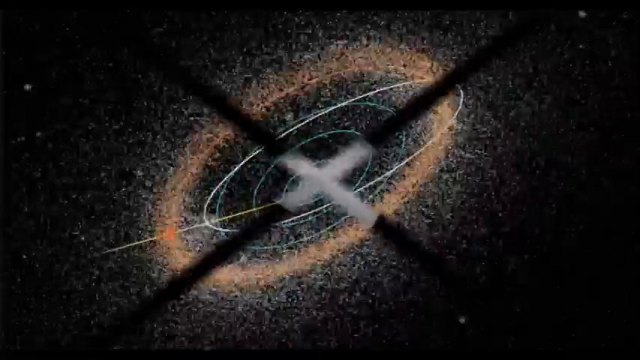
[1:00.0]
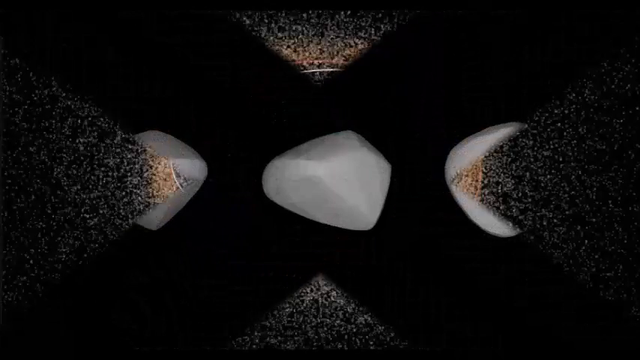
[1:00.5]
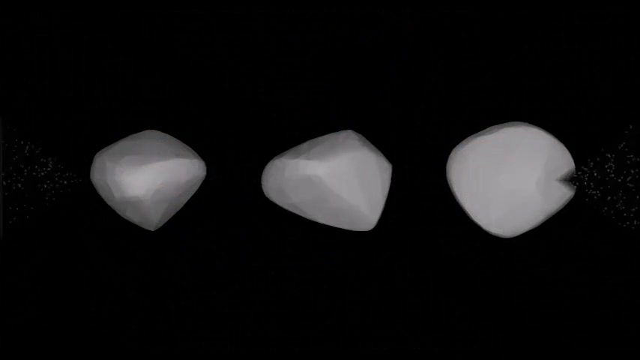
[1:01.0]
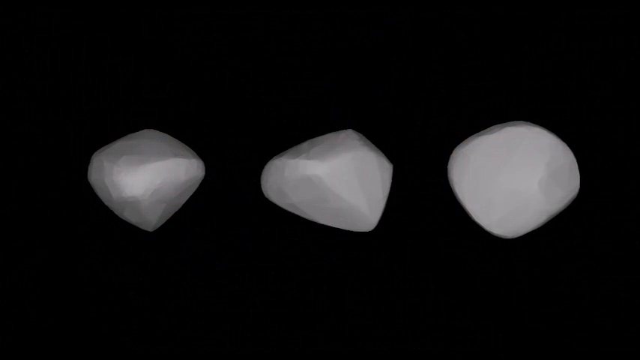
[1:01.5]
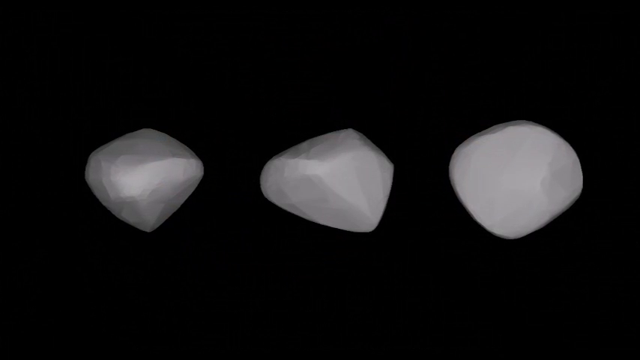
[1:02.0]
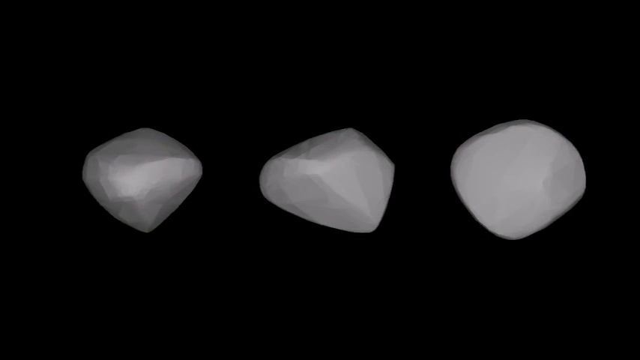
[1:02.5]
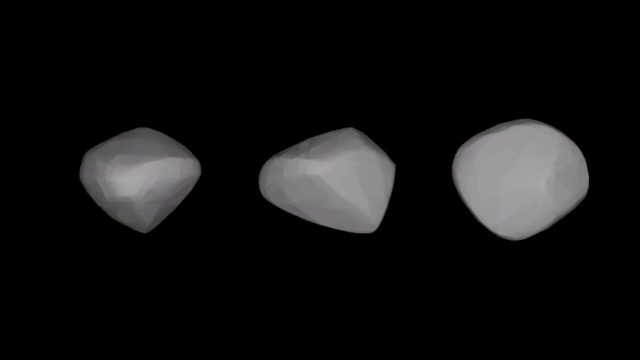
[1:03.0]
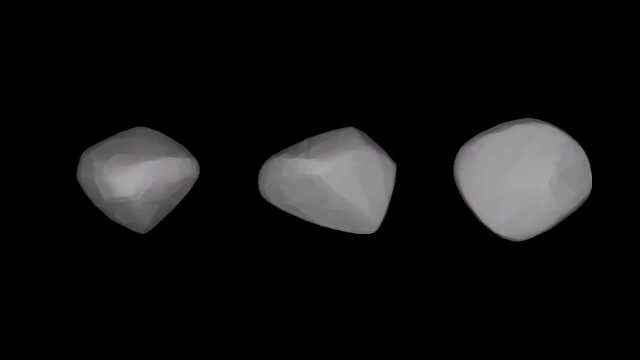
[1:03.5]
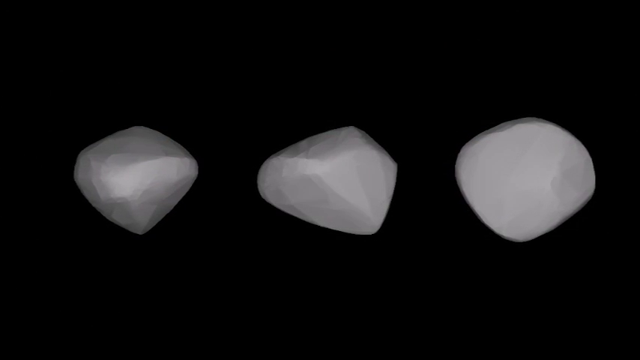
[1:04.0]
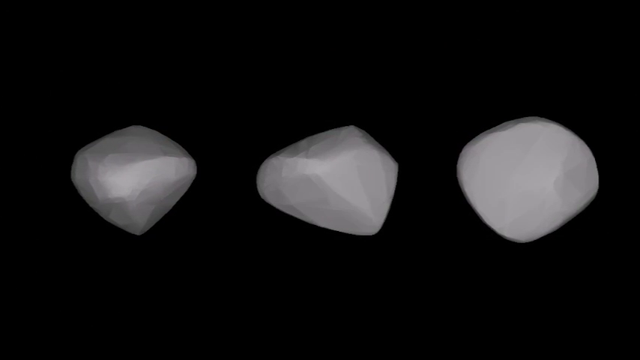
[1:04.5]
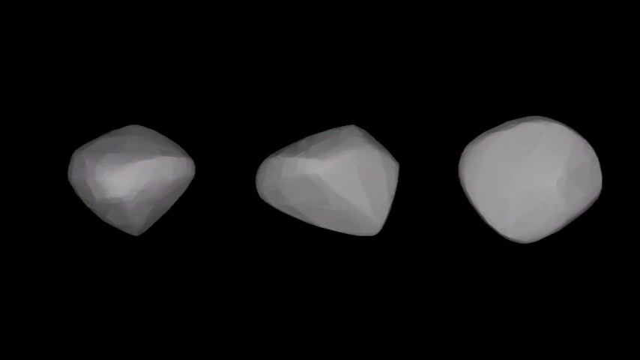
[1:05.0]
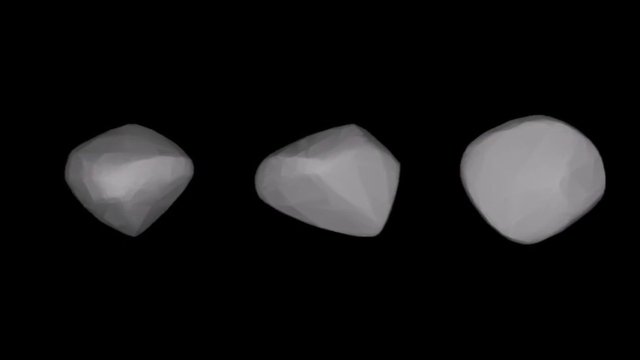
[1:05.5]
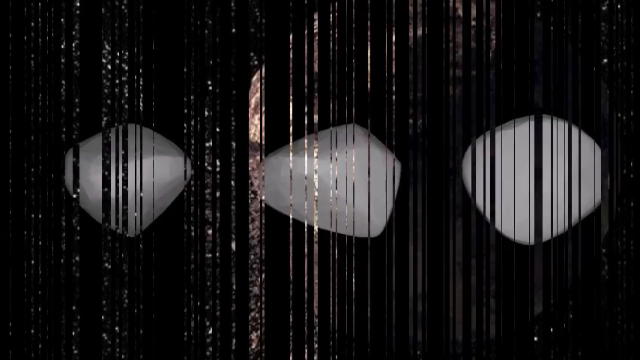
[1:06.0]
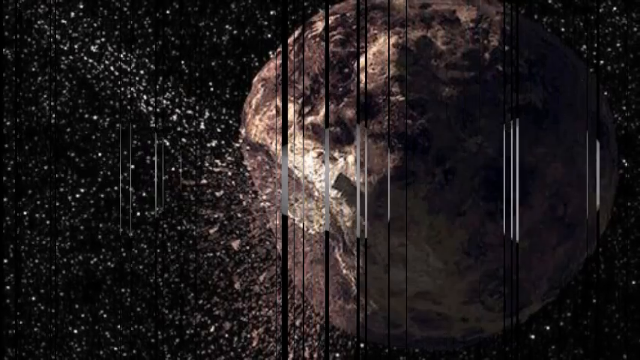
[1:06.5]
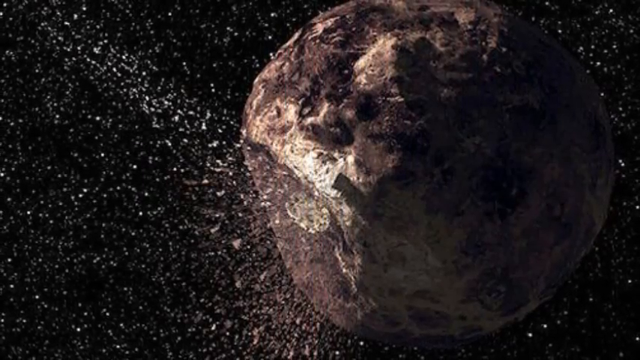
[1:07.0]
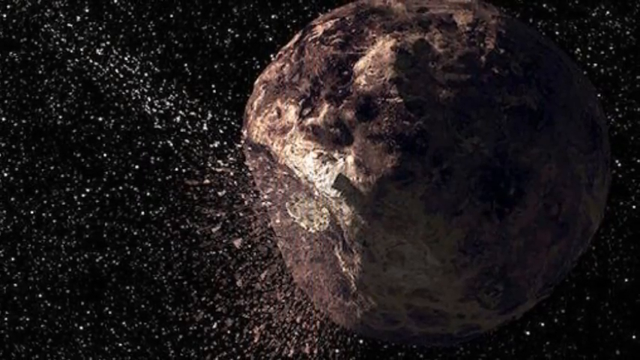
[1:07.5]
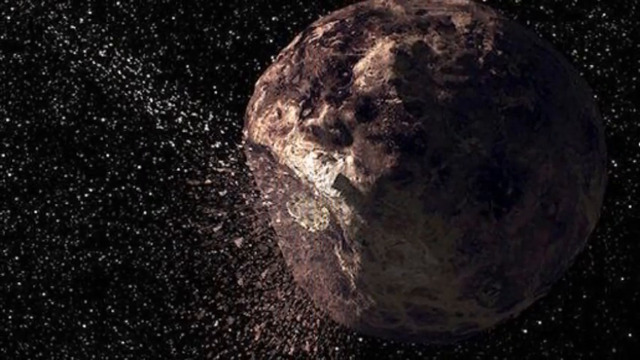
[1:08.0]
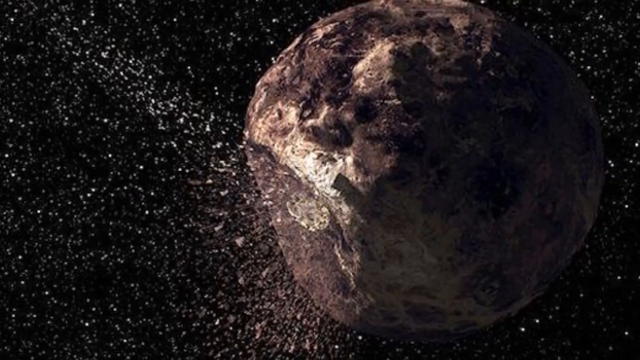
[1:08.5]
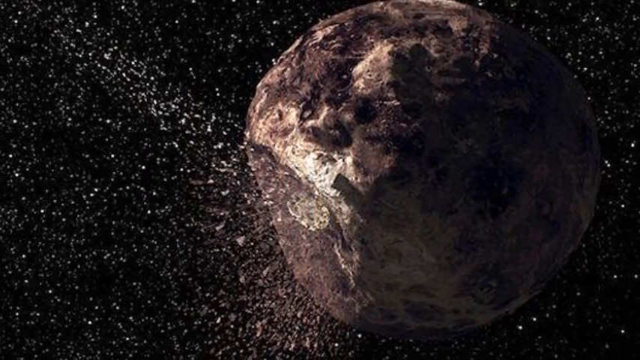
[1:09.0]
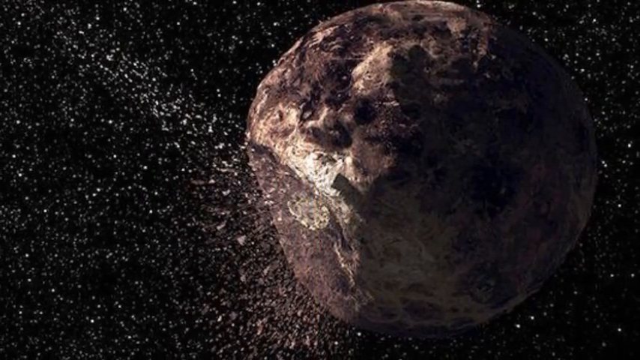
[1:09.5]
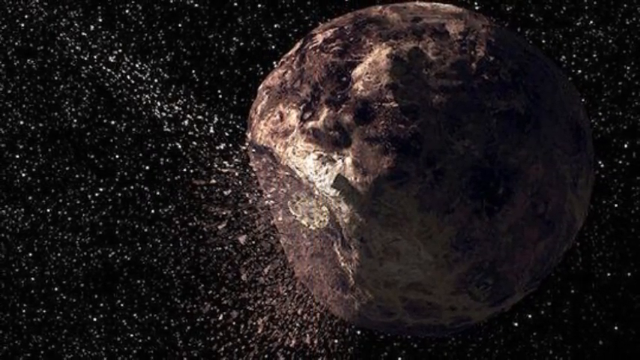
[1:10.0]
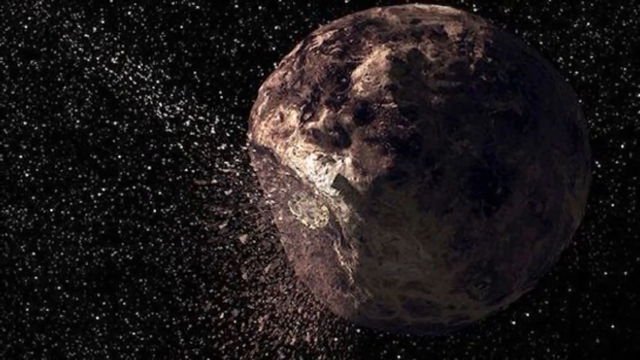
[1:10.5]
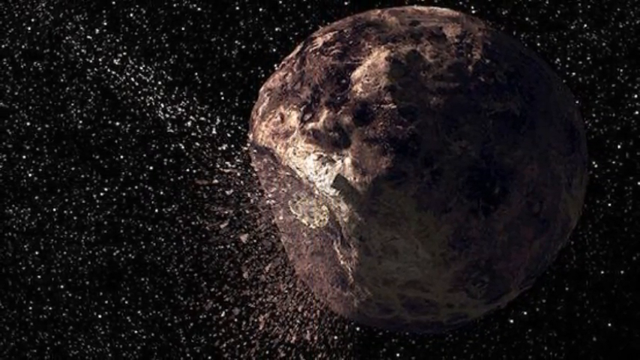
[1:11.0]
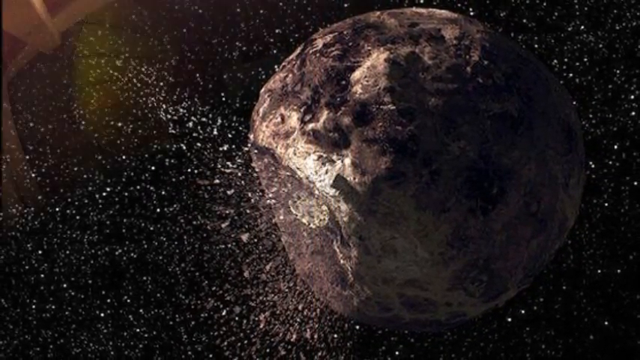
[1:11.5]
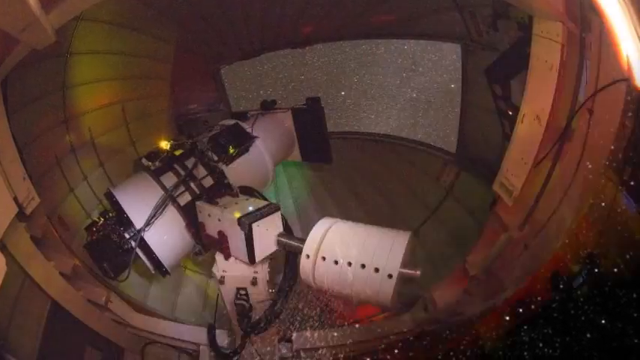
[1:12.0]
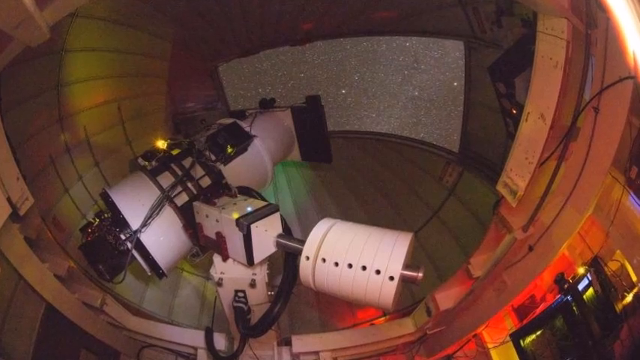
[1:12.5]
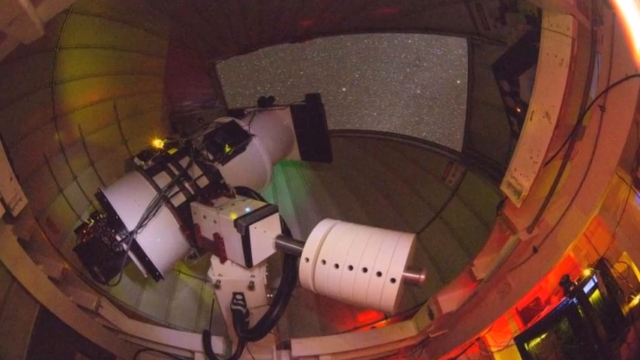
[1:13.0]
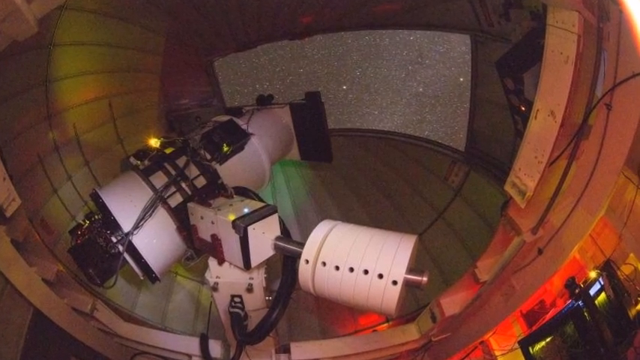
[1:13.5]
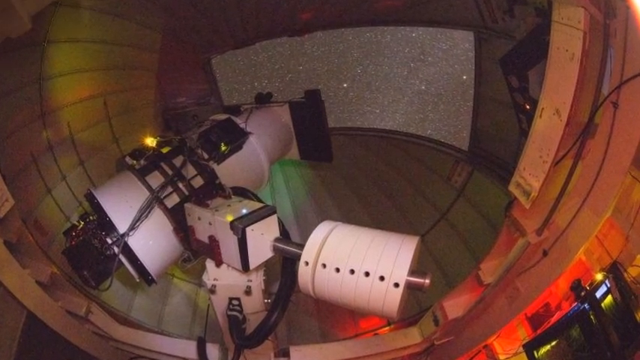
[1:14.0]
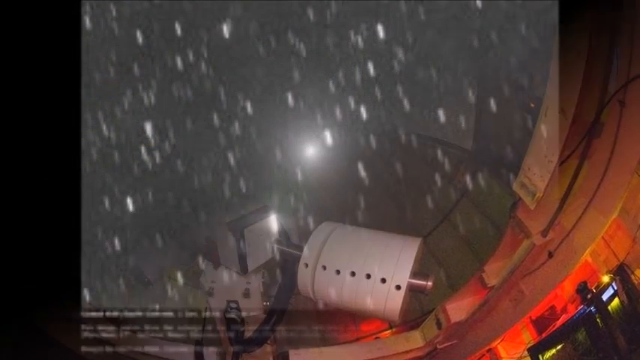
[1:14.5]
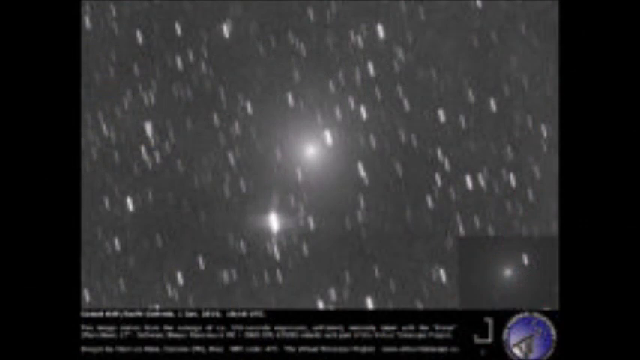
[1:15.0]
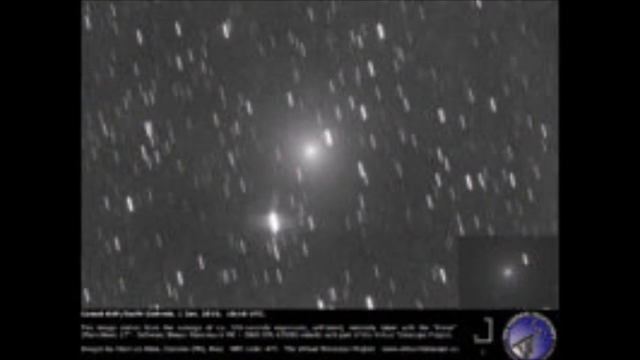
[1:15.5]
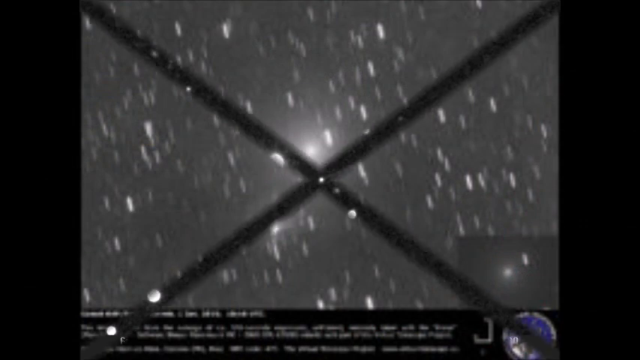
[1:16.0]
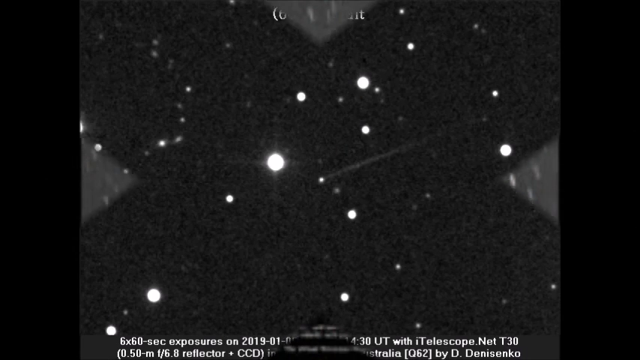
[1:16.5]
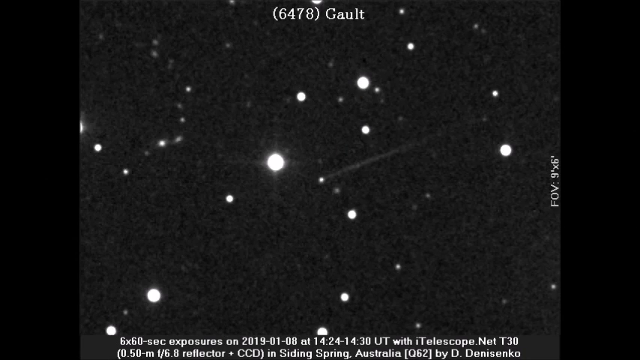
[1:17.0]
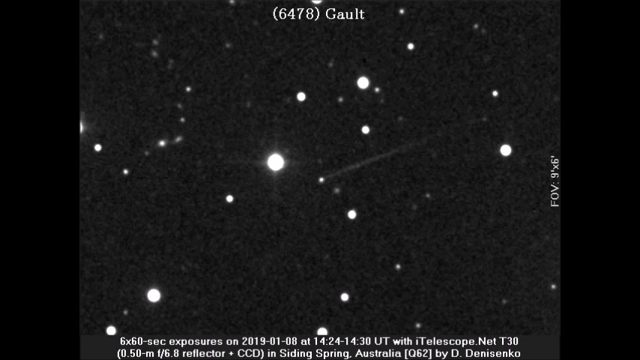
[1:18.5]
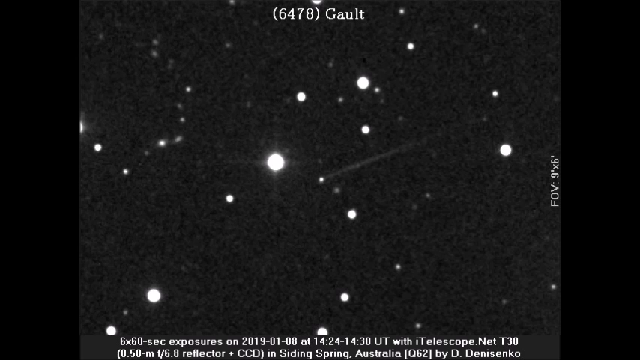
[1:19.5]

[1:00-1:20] From the rotating galaxy, an X wipe comes outward to an all-black background with three small white rocks in the center, arranged from left to right. The one on the left has a little gray on the top and bottom, probably just a shadow, and has a sort of point coming toward the camera. The middle one is more pointed on its left side, and the other looks more circular. The camera moves in on them very slowly. A wipe leads to a big meteor covering almost the whole right side, with a little black sky and white stars visible on the right. The bottom left portion of the meteor has broken off, and small particles come off it, going up to the left, as the camera slowly zooms out. The meteor is a brownish color. The scene cuts to the inside of a wooden room with a big white telescope at the bottom, and the camera slowly zooms in toward the telescope. It then cuts to a wide shot of the stars, followed by an X wipe to another shot of the stars with the asteroid.